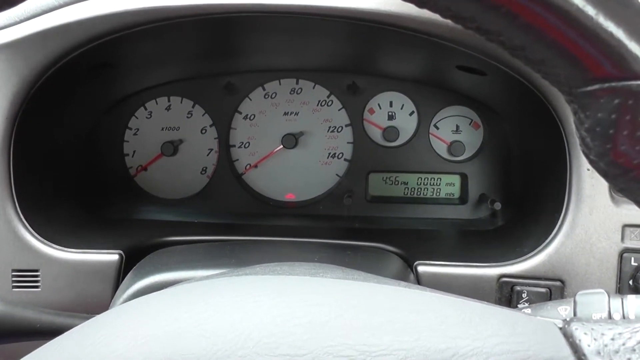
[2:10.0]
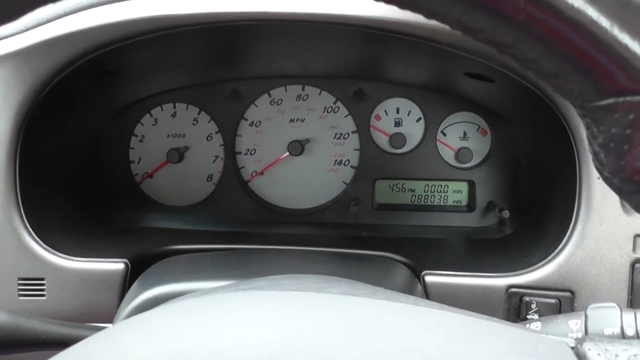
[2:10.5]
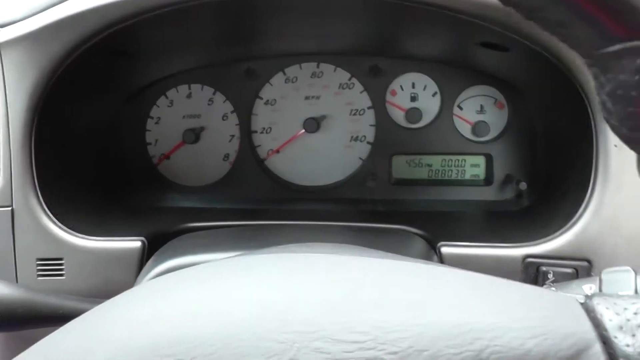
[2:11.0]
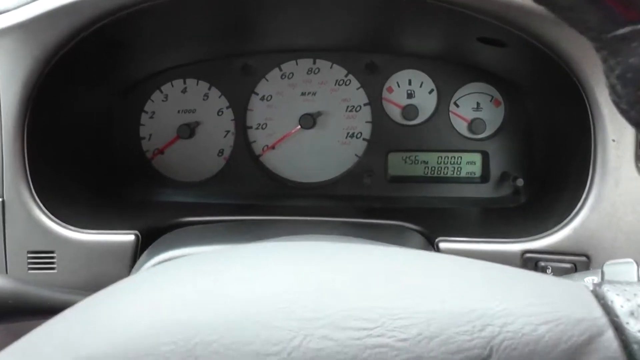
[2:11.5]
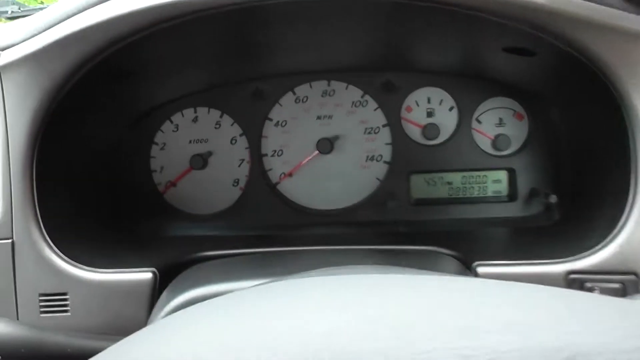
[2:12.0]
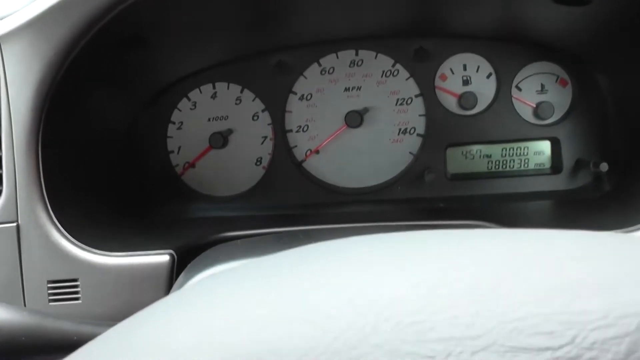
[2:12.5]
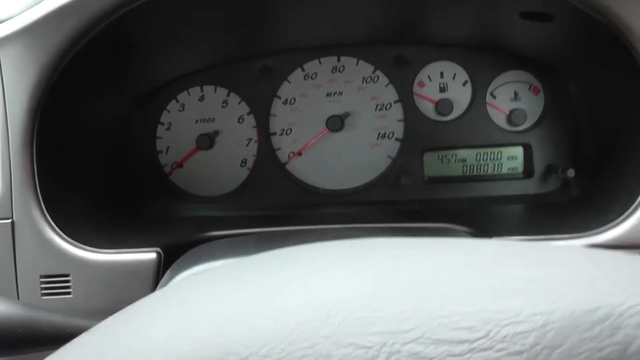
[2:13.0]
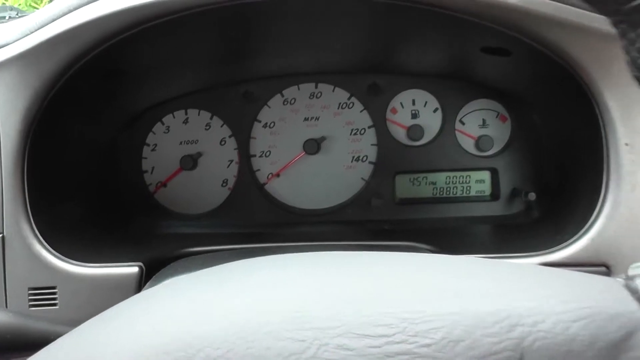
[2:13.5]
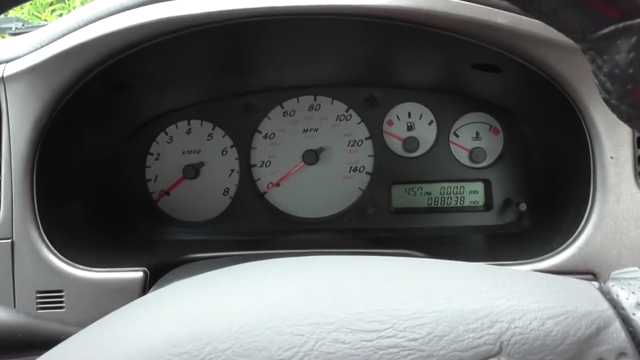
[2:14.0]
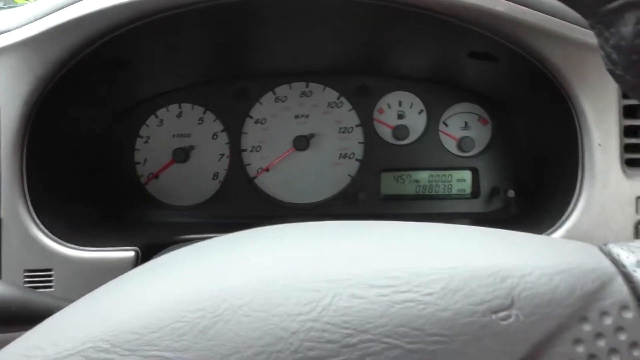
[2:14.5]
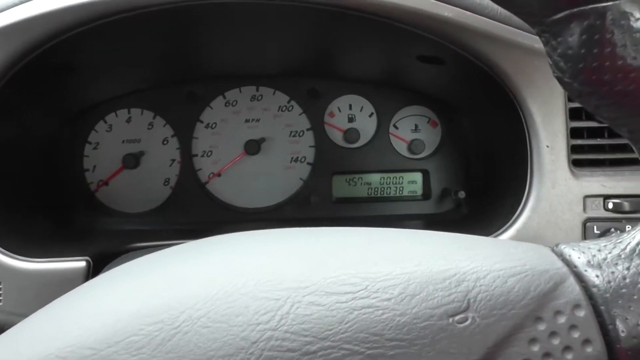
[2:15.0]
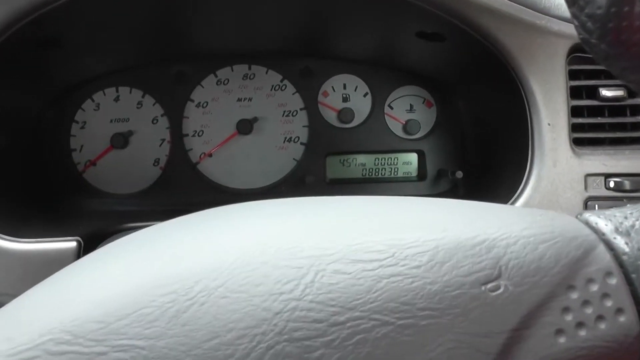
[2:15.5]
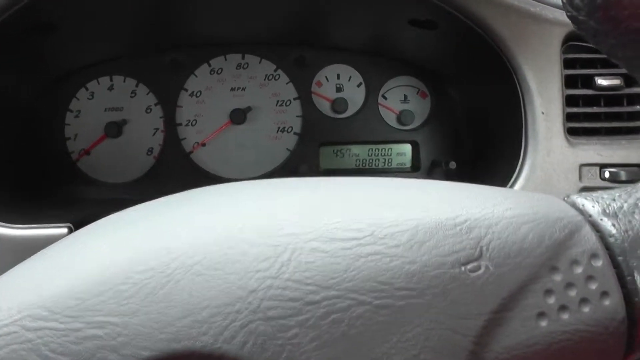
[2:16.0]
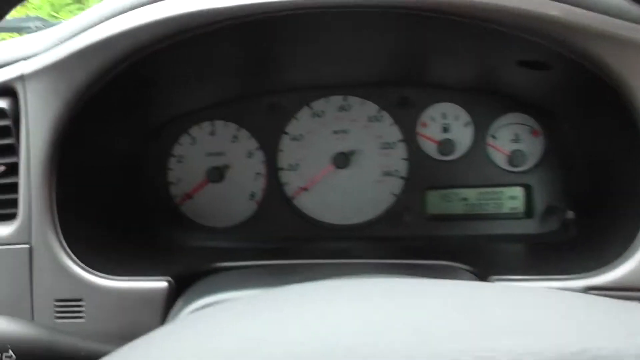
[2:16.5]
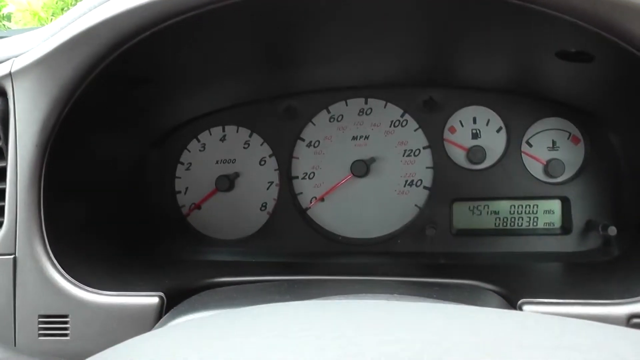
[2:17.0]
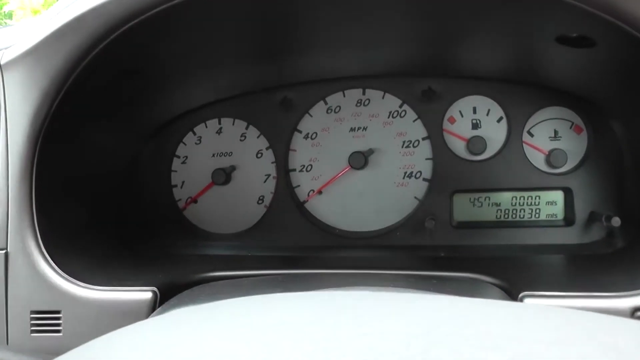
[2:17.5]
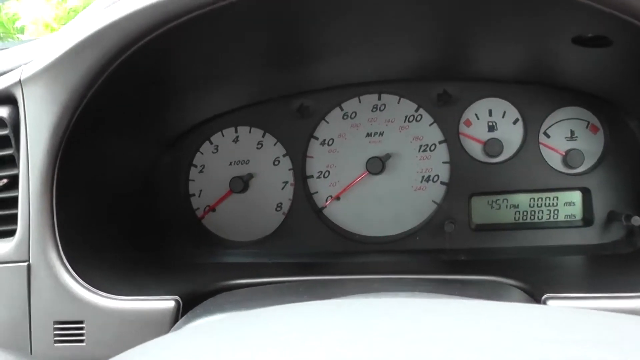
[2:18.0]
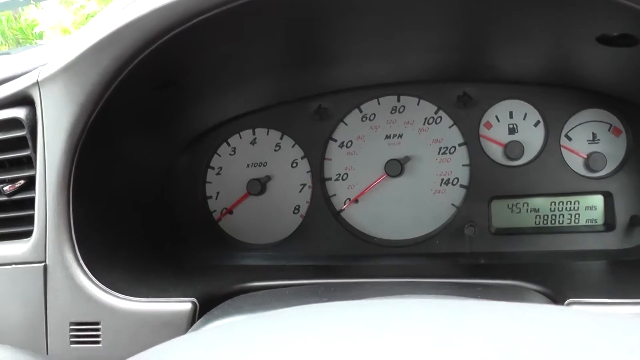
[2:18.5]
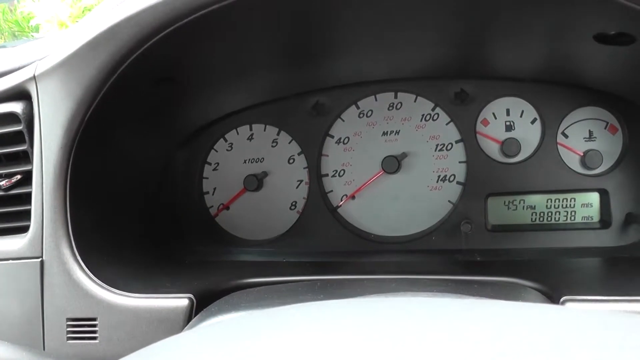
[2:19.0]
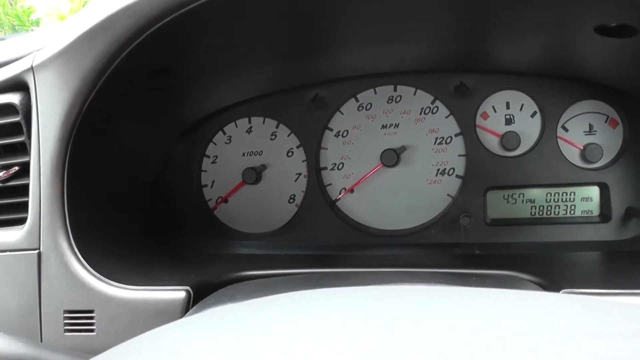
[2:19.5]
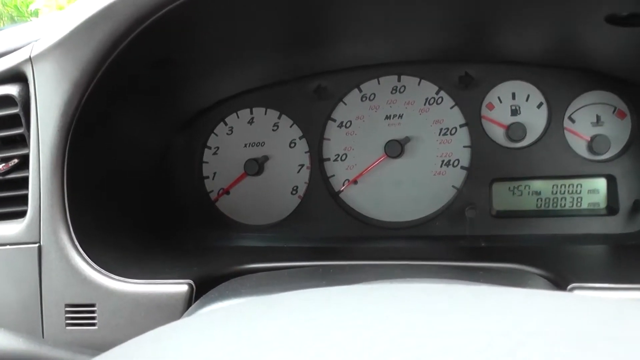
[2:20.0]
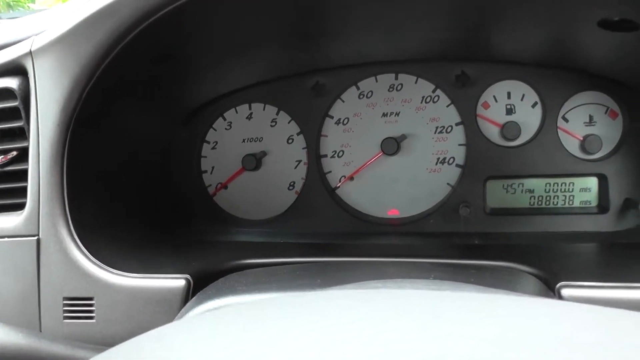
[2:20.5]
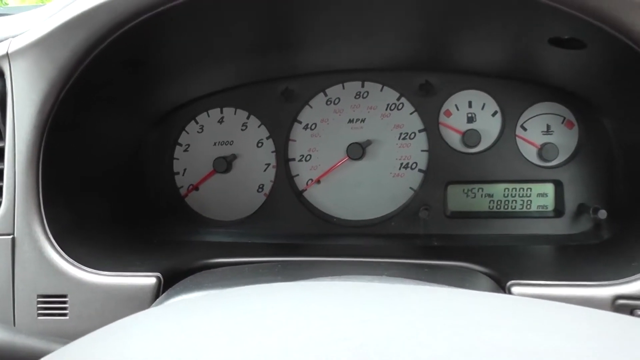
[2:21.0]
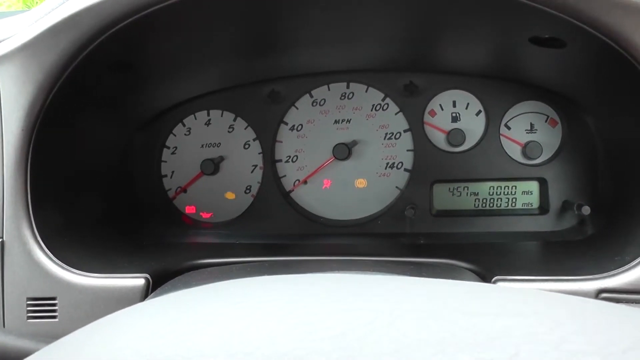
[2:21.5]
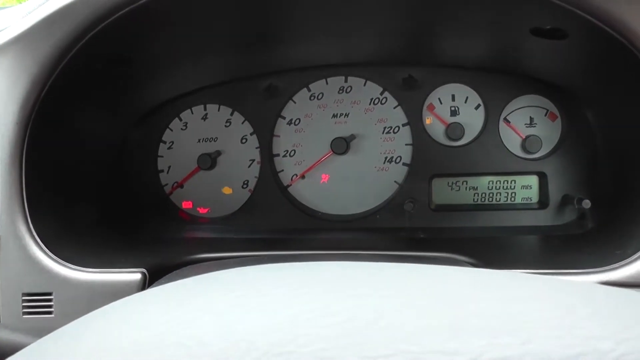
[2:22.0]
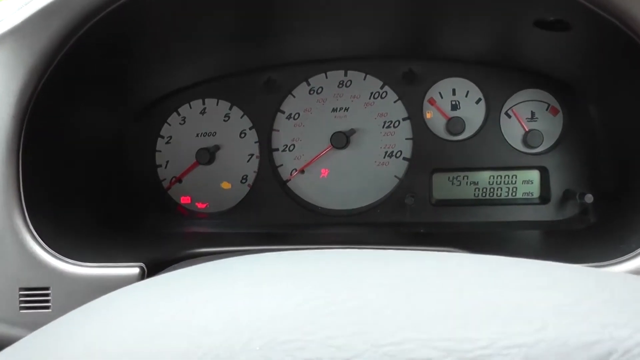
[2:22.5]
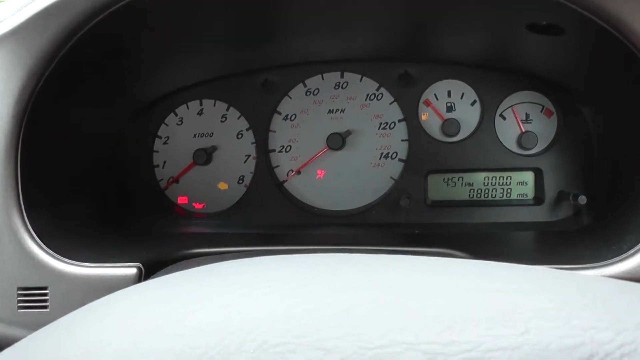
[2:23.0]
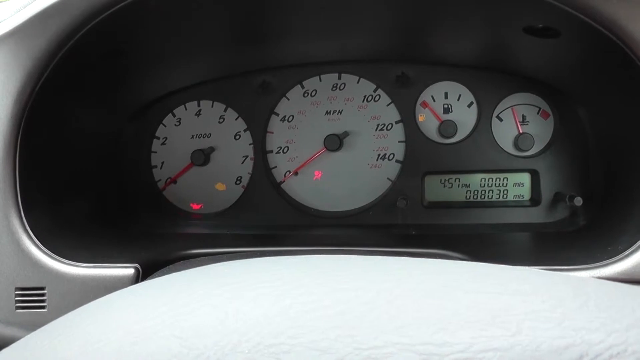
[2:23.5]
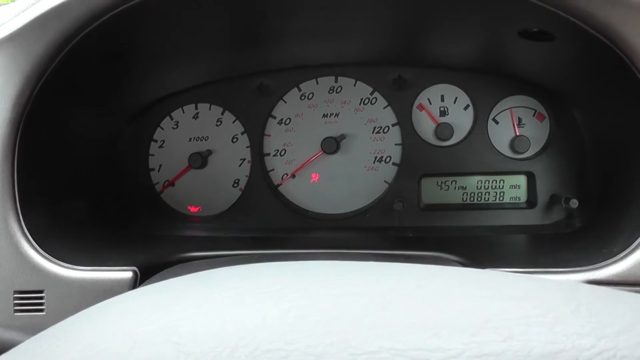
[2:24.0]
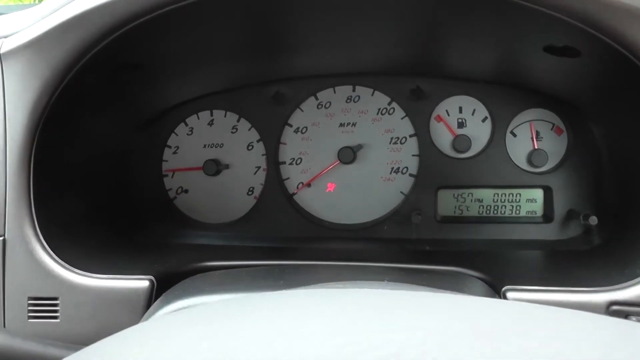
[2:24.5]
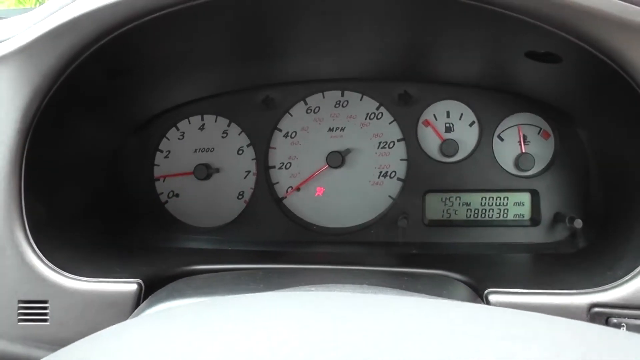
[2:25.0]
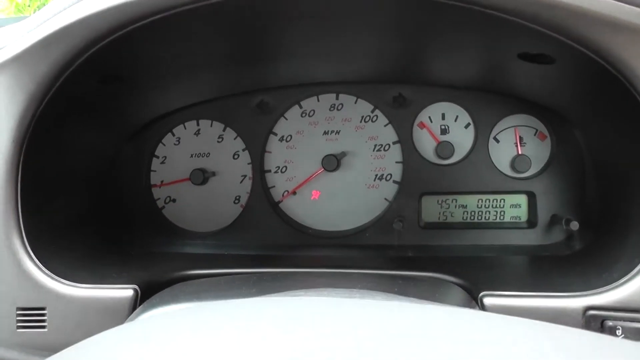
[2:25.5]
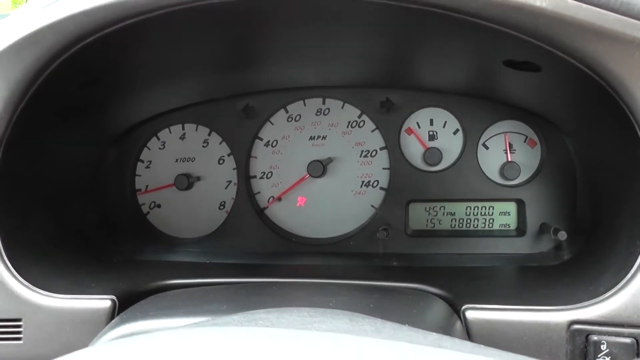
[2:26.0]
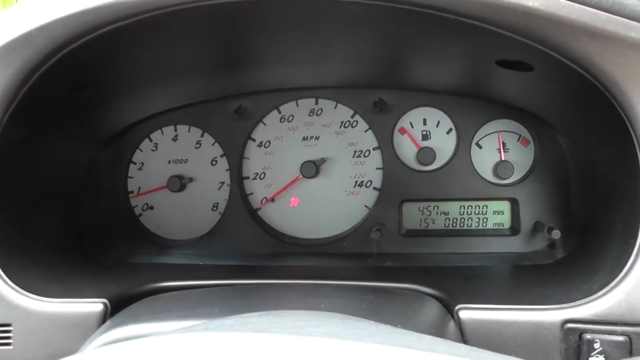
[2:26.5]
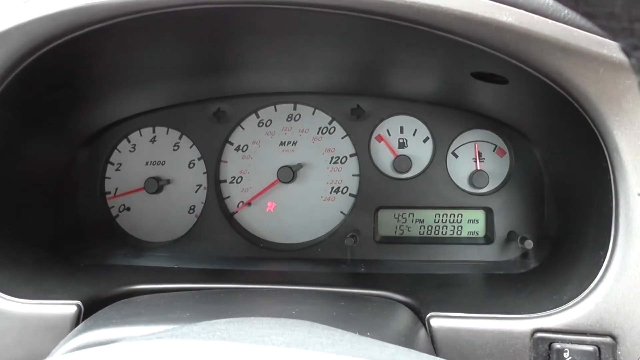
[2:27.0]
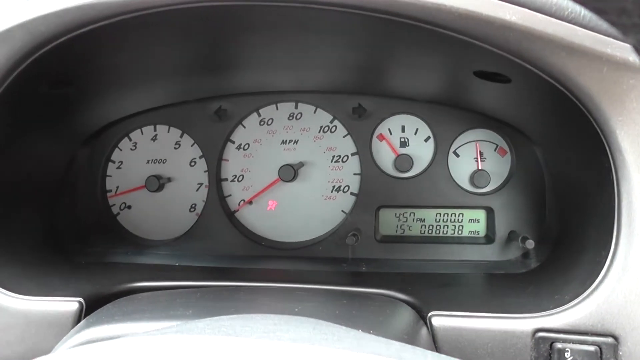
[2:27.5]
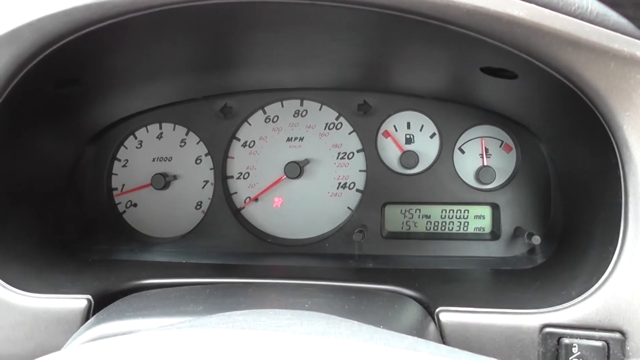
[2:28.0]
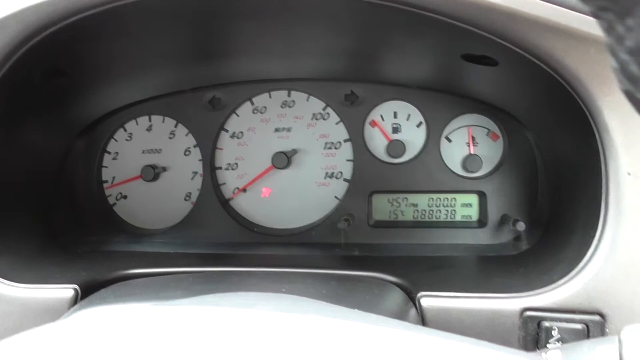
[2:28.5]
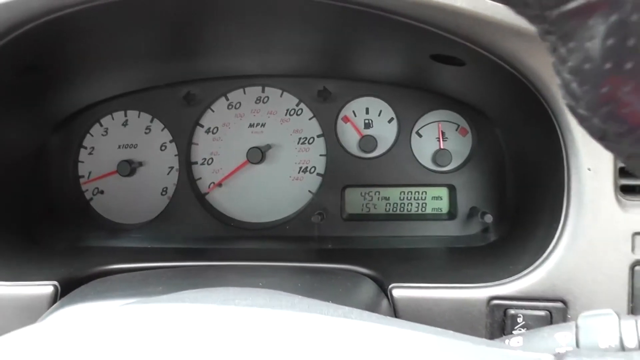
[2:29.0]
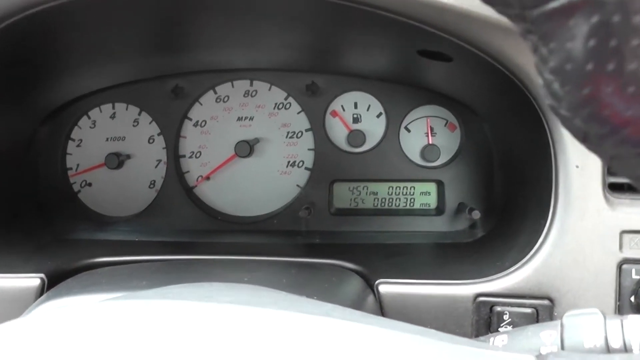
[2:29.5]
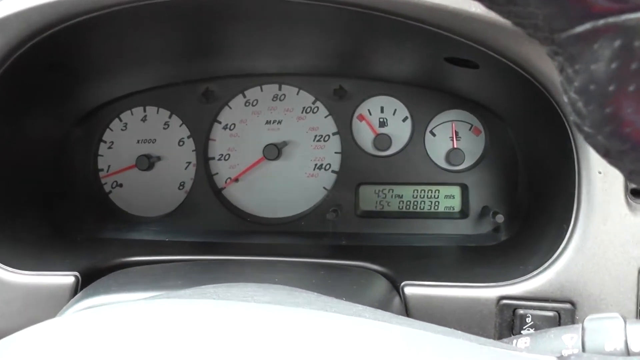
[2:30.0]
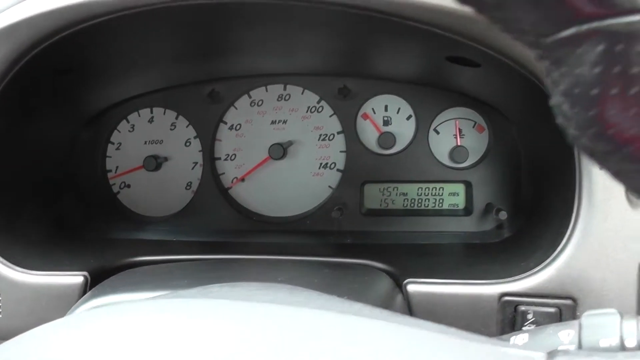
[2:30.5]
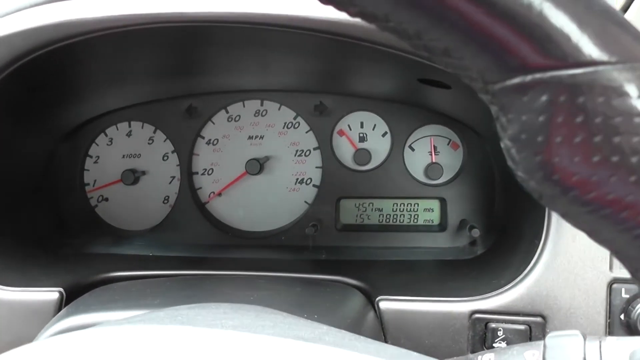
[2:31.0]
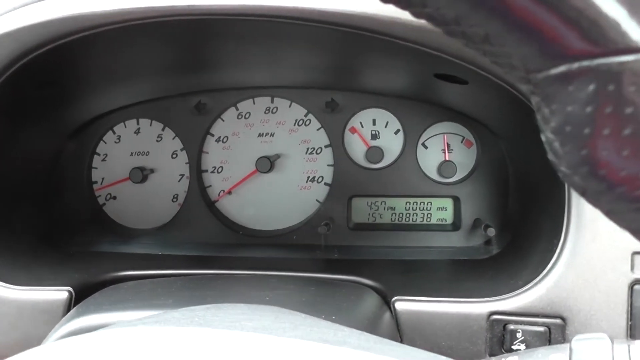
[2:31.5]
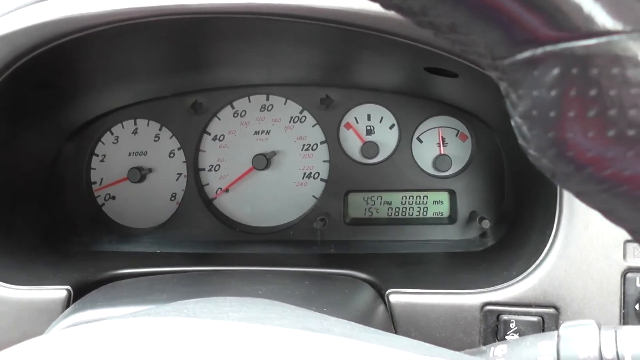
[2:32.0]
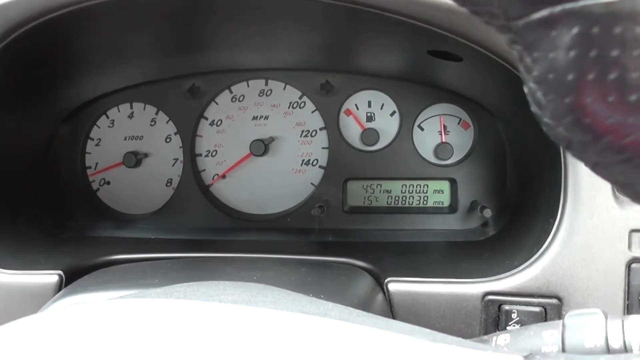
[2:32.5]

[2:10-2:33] The view shows the instrument panel directly in front of the driver, as if from the driver's seat. On the left is the RPM gauge, in the center the round MPN gauge, the largest on the panel, to its right the round fuel gauge, and to the right of that the coolant or water gauge. The camera moves around a bit, up and down and side to side, as if the operator is unsure where to aim it, then gives a closer view of the left side of the panel. It looks like the car may have been started, as some lights suddenly light up on the gauges on the far left and on the middle gauge. The lights go off except one: a red indicator light at the bottom of the large center gauge stays on.